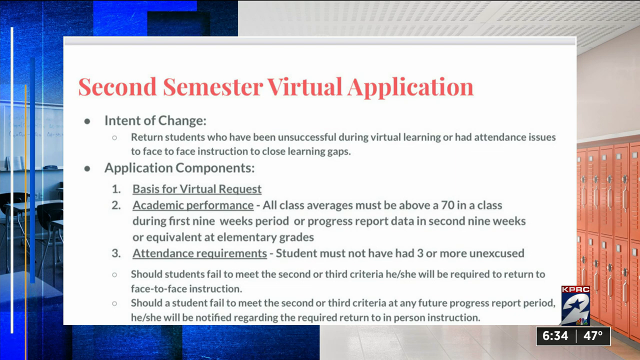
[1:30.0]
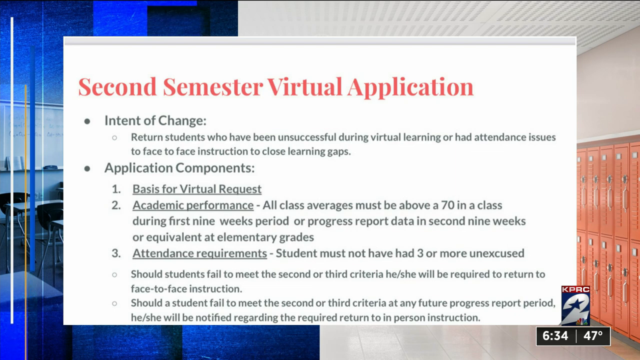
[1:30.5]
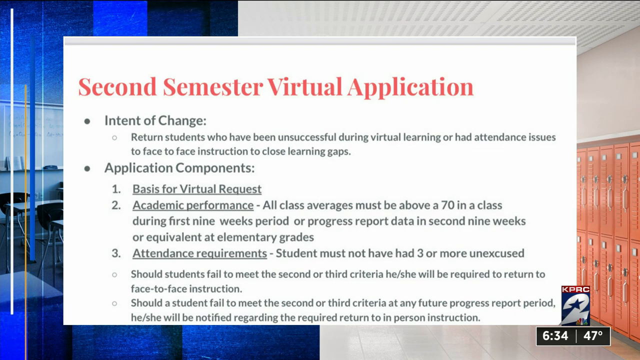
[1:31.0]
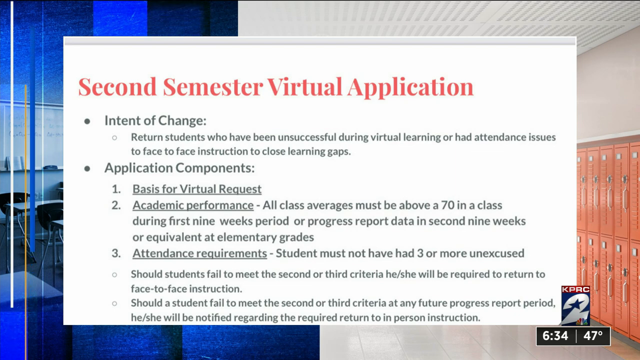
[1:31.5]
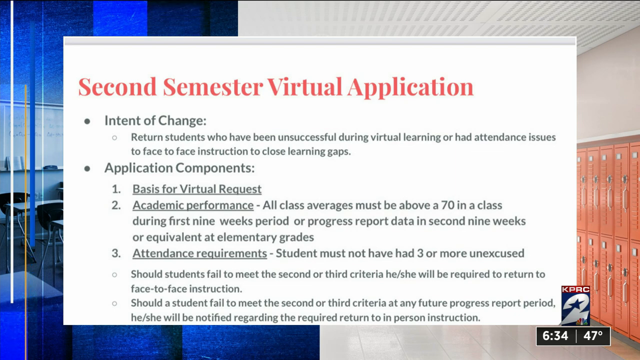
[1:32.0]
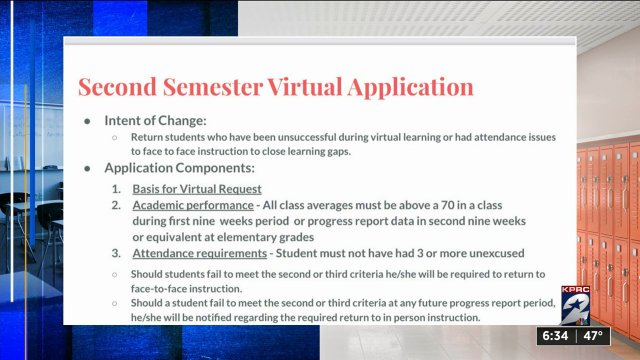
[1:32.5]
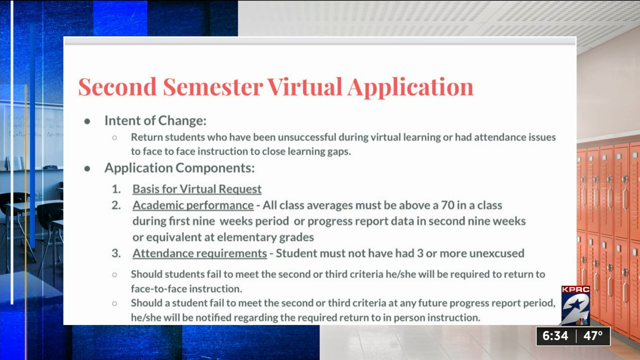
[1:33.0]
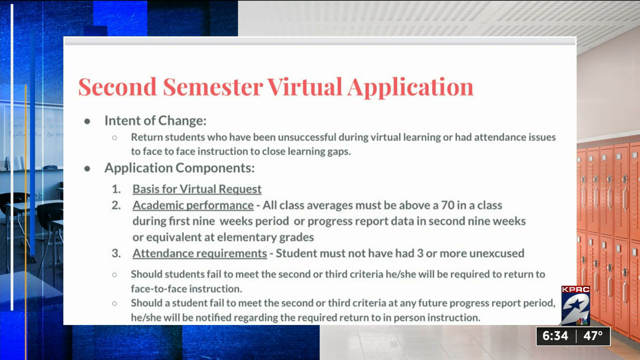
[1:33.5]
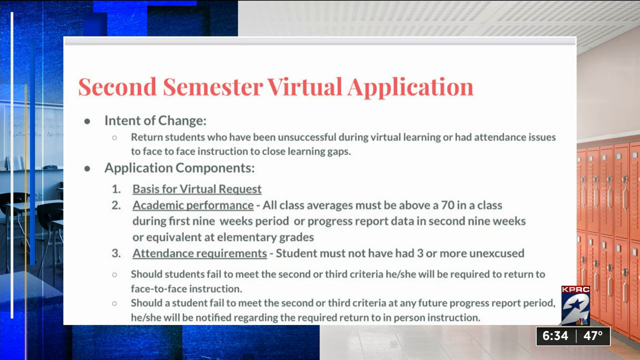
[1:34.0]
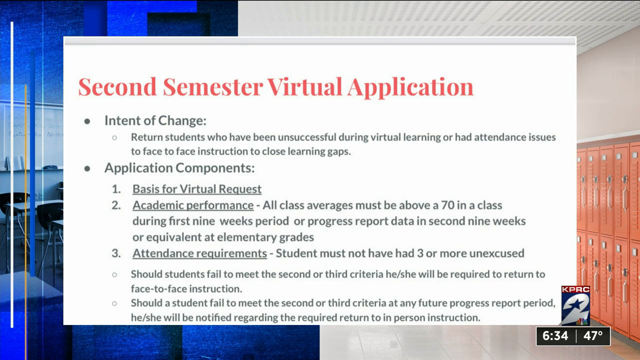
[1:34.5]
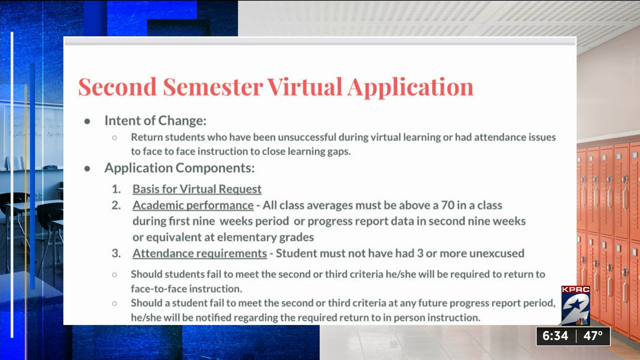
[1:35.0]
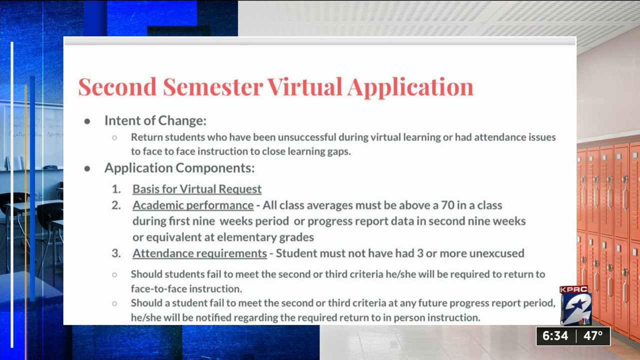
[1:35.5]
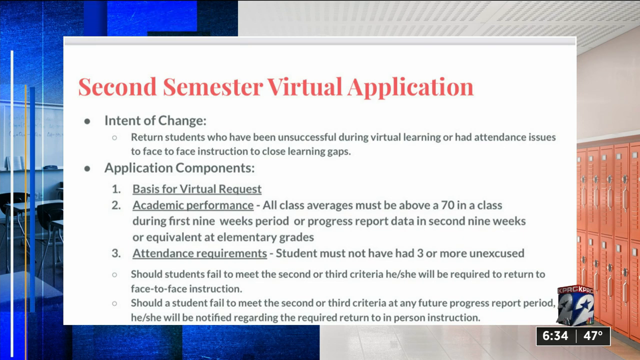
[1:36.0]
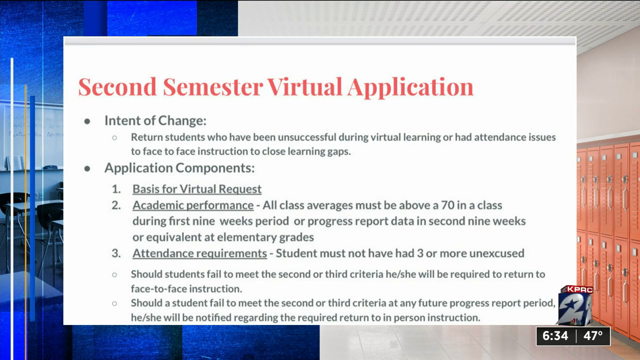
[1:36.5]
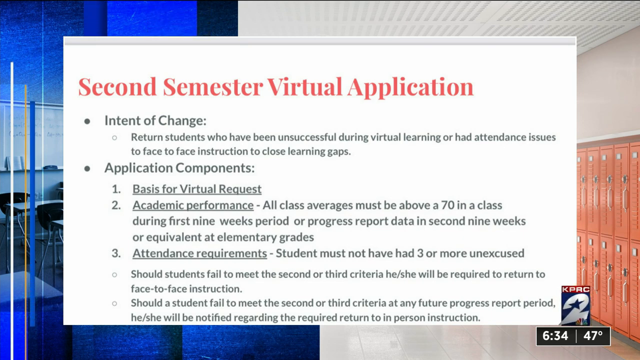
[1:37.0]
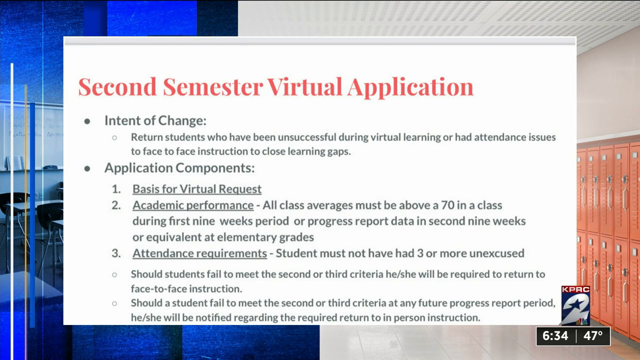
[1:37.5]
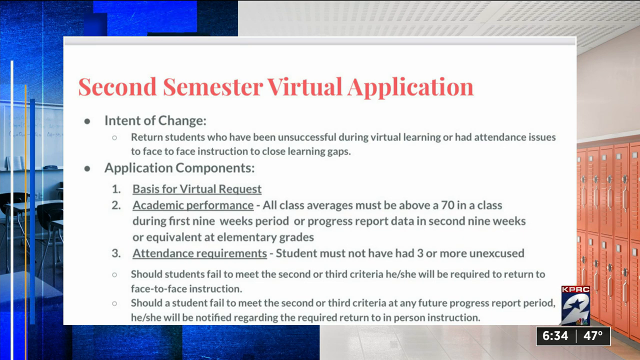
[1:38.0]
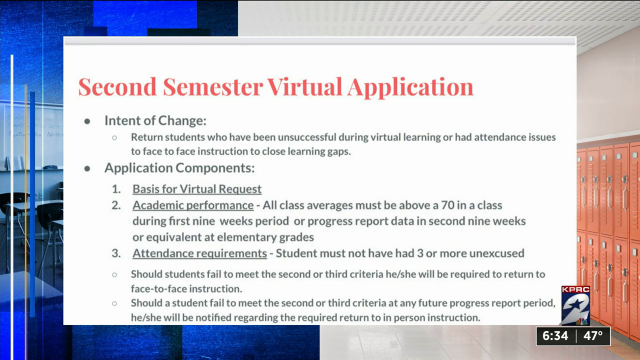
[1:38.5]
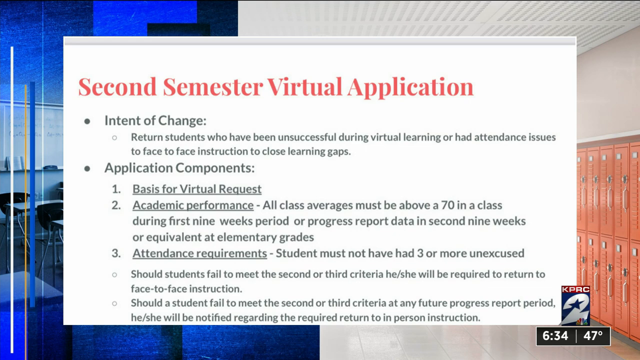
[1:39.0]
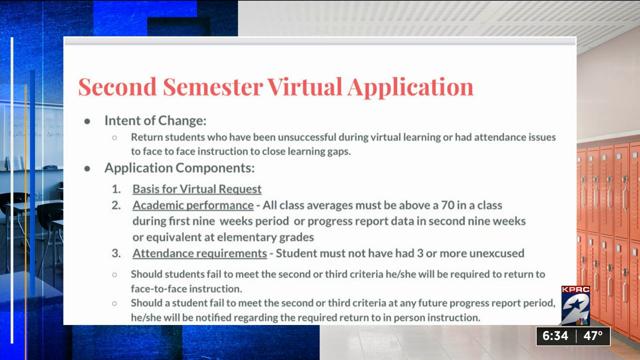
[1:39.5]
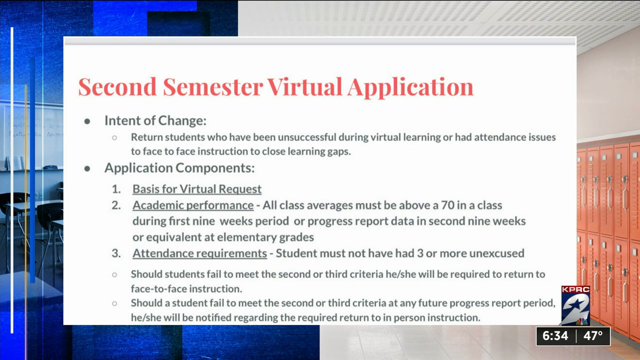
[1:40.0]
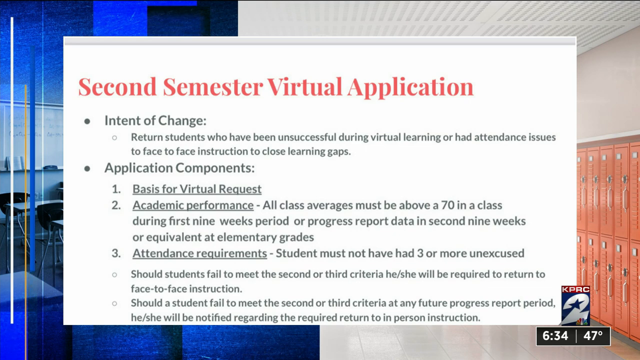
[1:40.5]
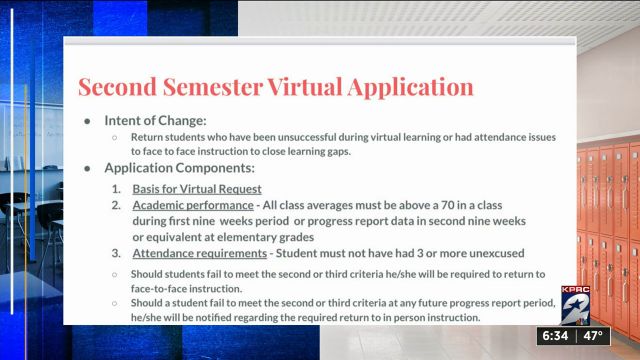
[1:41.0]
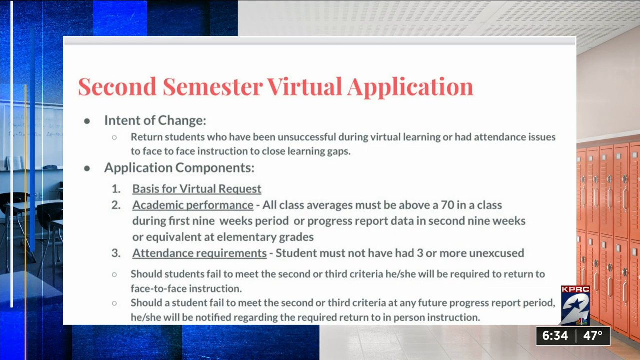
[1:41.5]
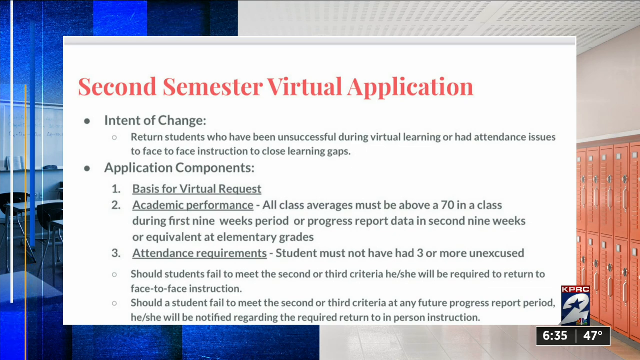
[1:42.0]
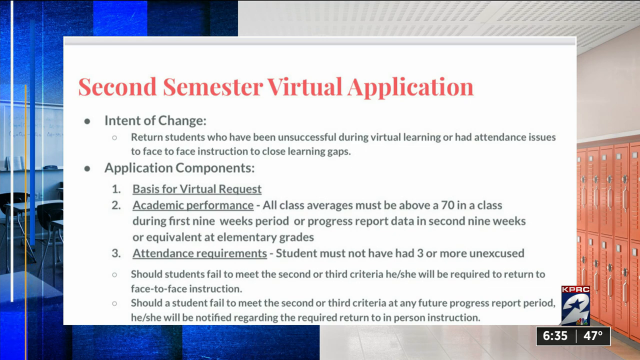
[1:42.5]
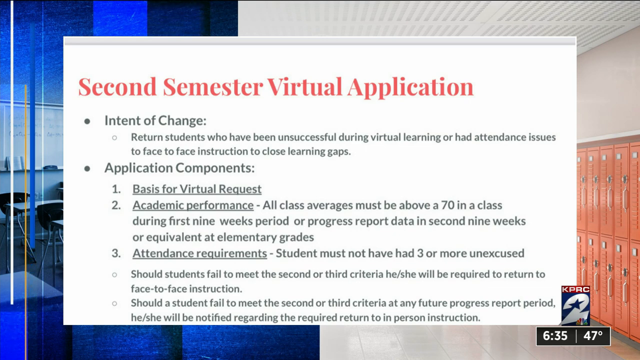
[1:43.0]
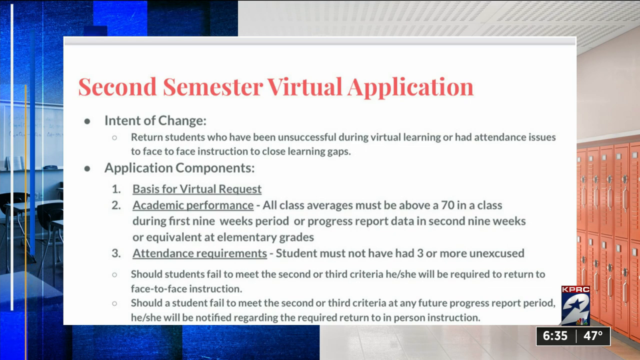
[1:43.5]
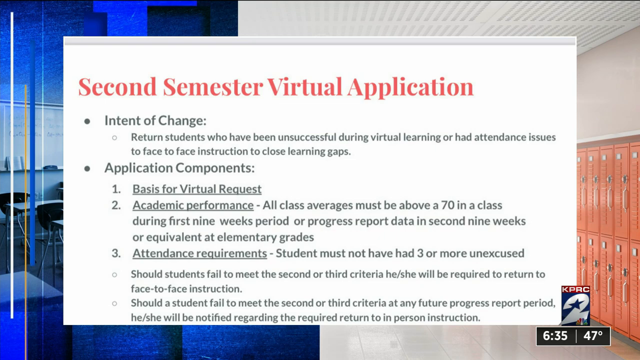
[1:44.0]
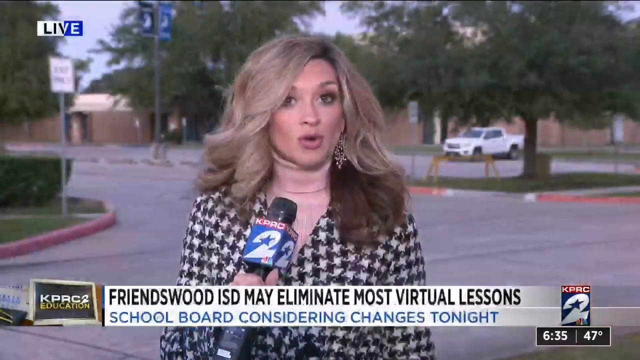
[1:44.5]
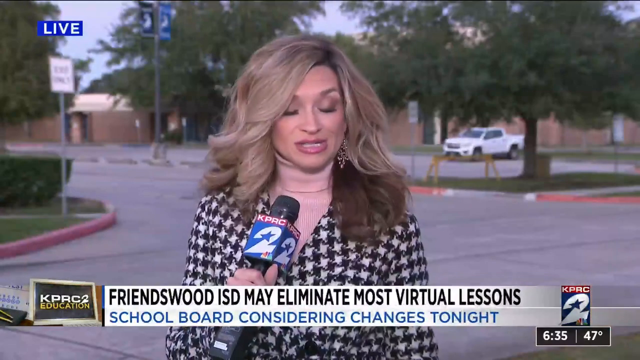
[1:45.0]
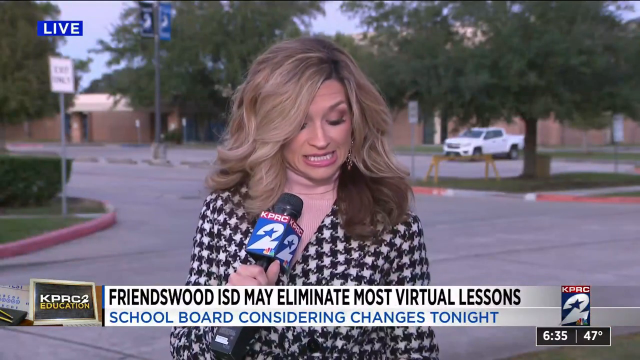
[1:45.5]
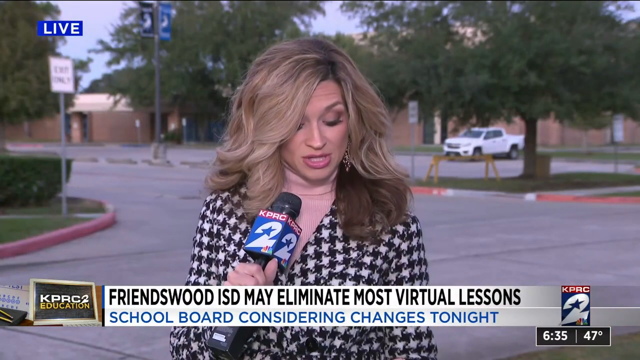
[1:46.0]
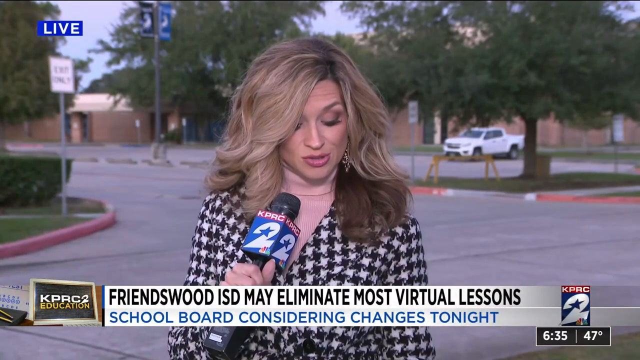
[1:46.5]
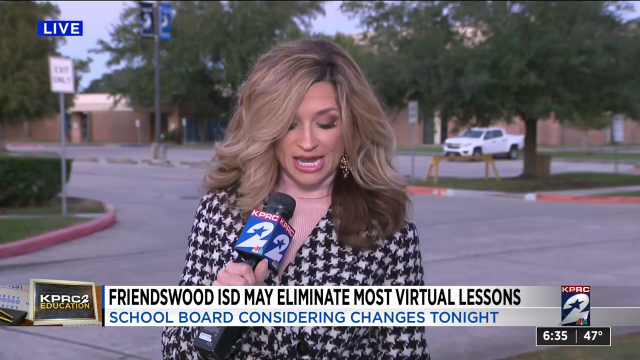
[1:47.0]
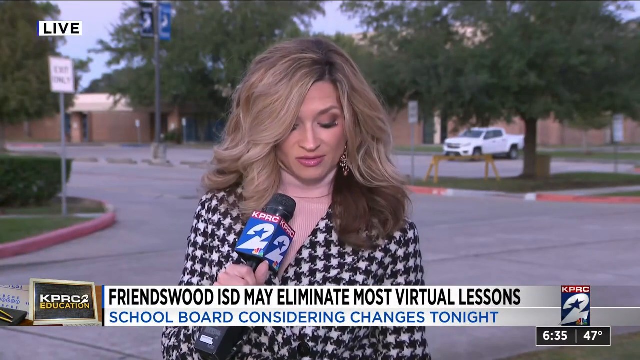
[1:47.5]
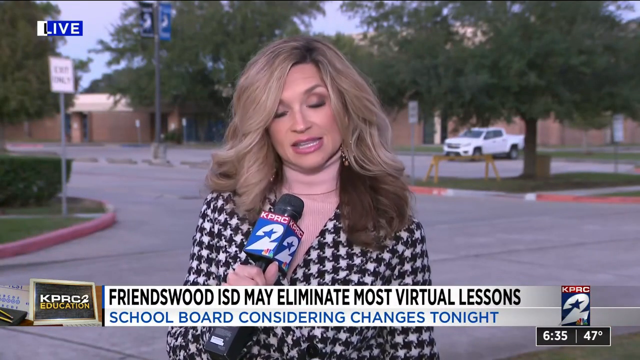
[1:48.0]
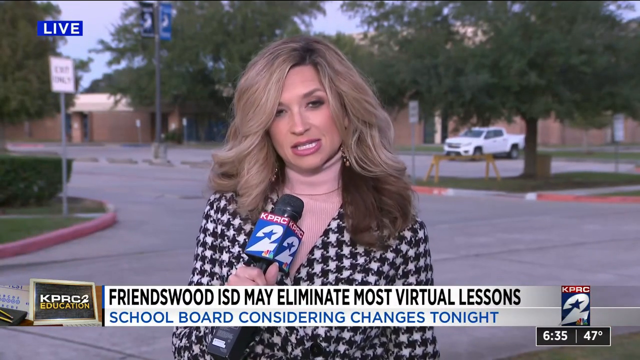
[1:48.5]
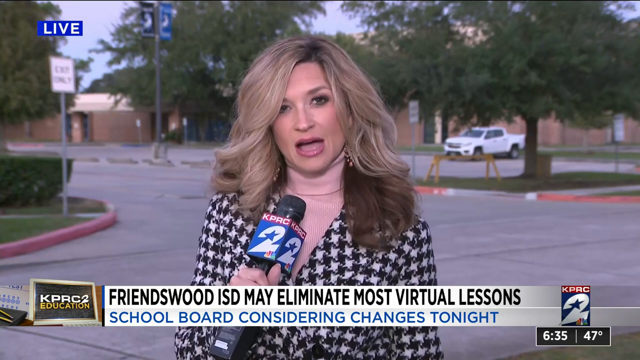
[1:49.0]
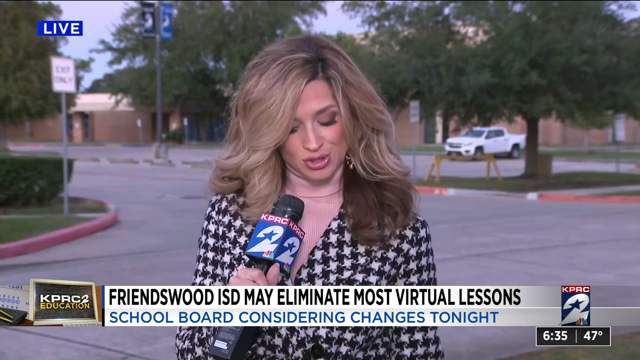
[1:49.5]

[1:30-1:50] A slide about the second semester virtual application is shown, covering the intent of change. One bullet point reads "return students who have been unsuccessful during virtual learning, or had attendance issues," referring to closing learning gaps. Another bullet point lists application components: "number one, basis for virtual request, number two, academic performance, and number three, attendance requirements." The video then goes back to the woman doing the report, seen in a live view. Further details on these components appear: for academic performance, all class averages must be above 70 in a class during the first nine weeks, or progress report data in the second nine weeks, or equivalent elementary grades; for attendance, the student must not have had three or more unexcused absences.